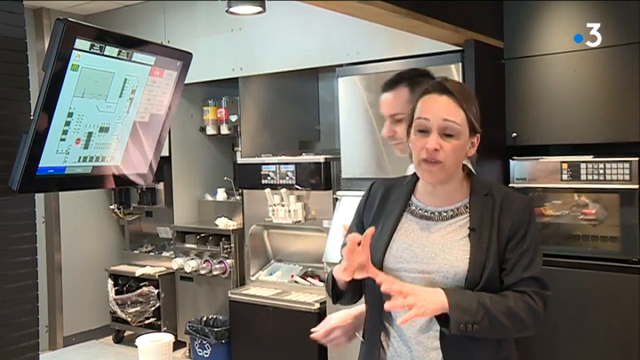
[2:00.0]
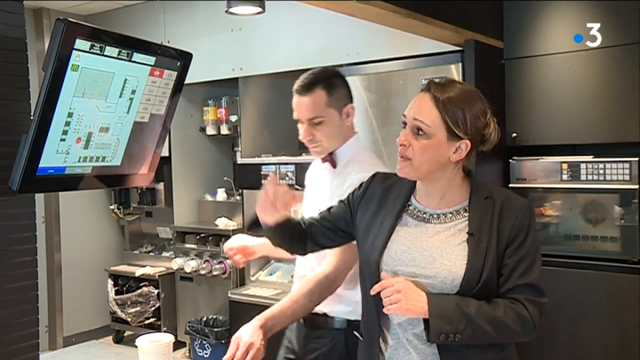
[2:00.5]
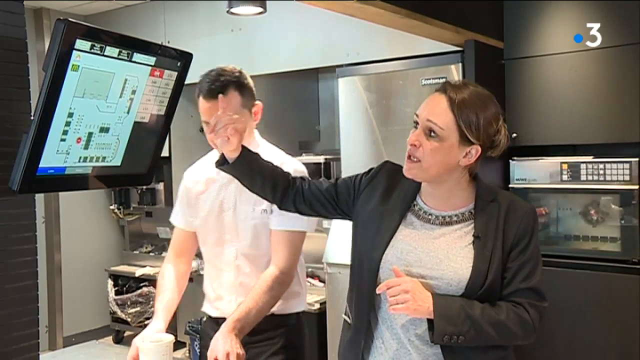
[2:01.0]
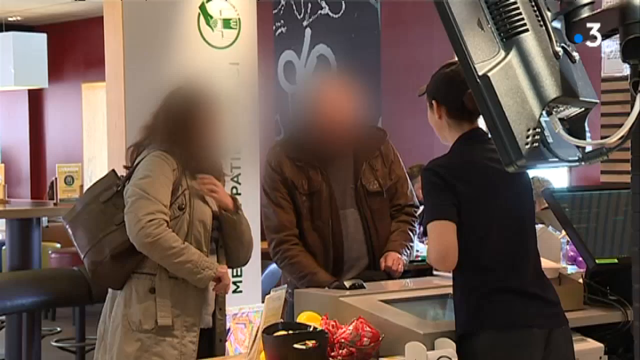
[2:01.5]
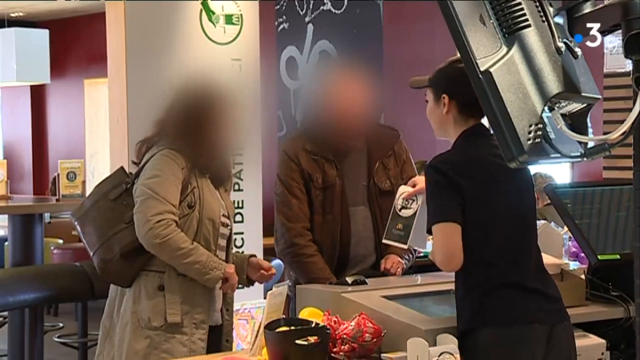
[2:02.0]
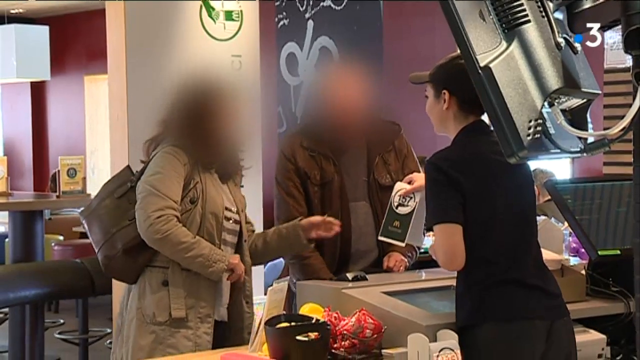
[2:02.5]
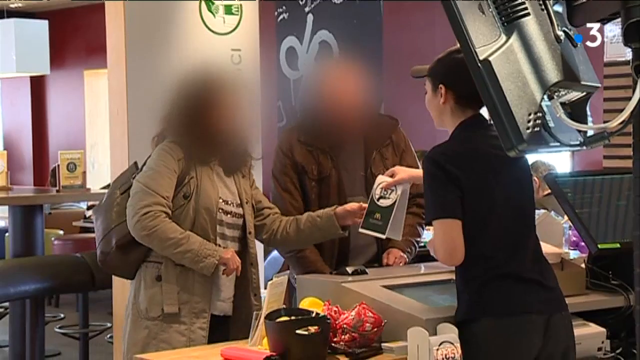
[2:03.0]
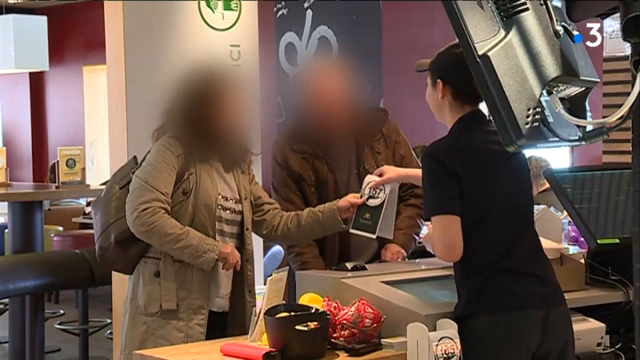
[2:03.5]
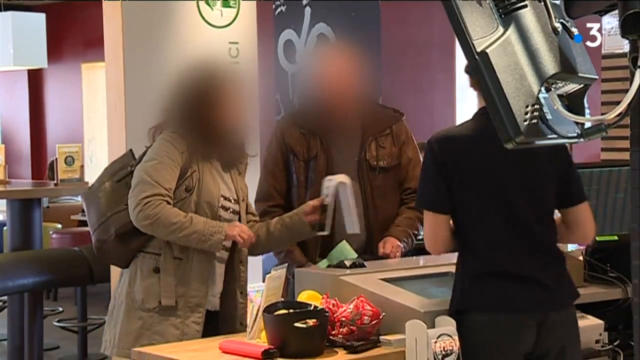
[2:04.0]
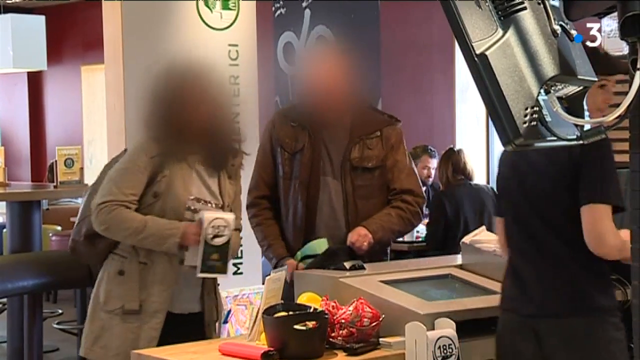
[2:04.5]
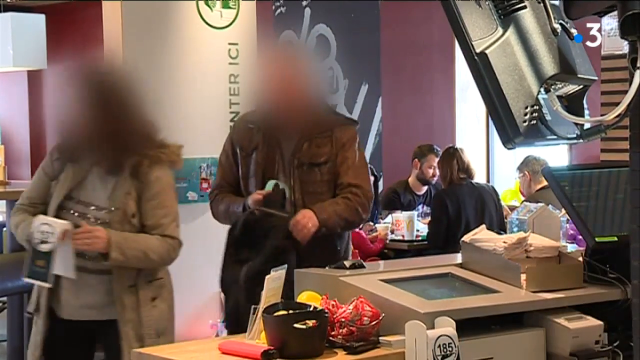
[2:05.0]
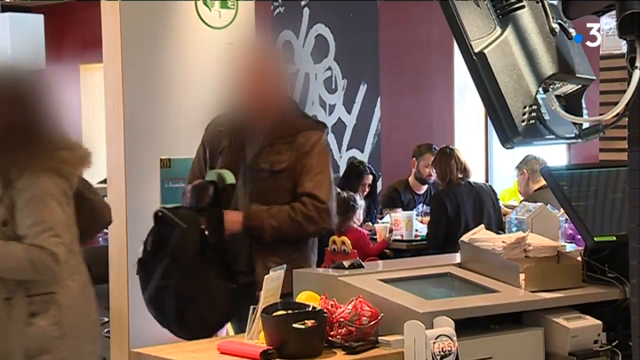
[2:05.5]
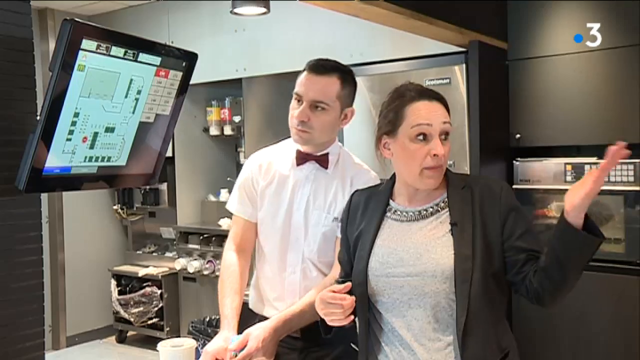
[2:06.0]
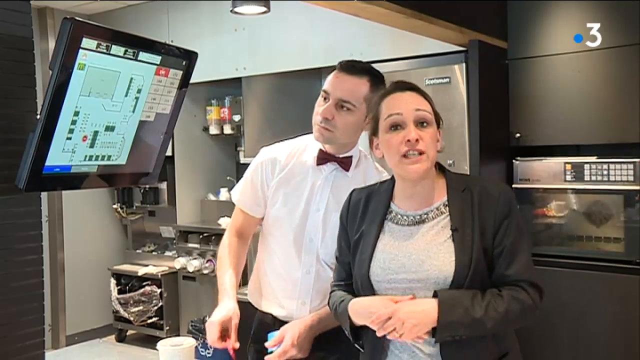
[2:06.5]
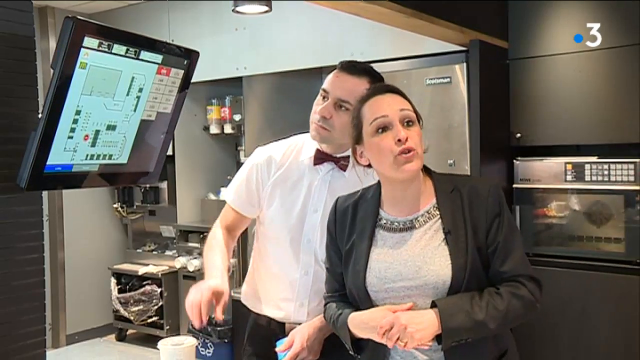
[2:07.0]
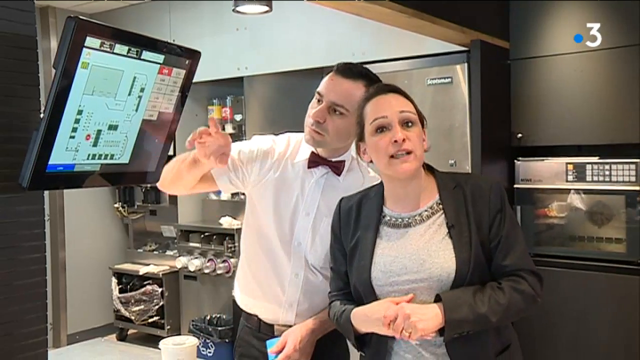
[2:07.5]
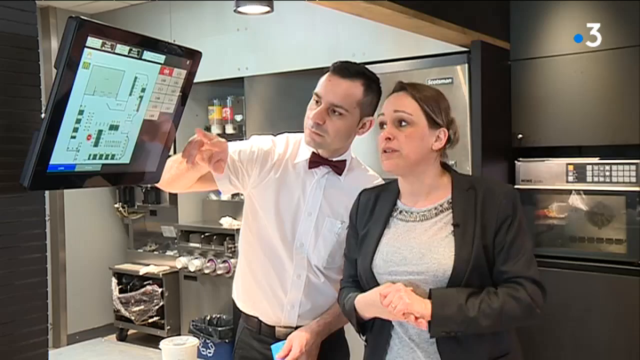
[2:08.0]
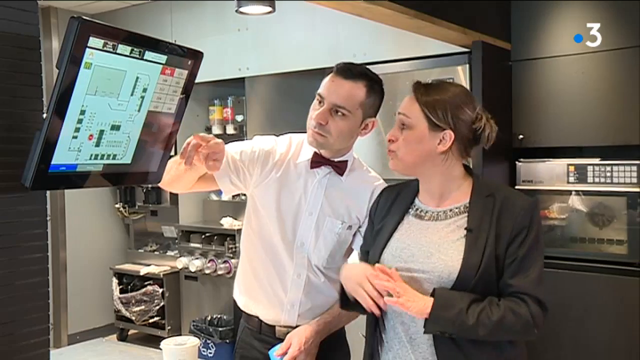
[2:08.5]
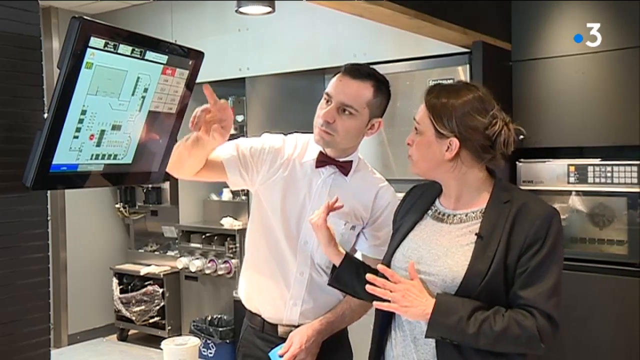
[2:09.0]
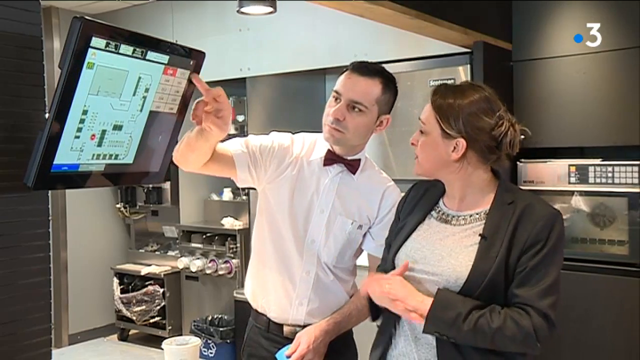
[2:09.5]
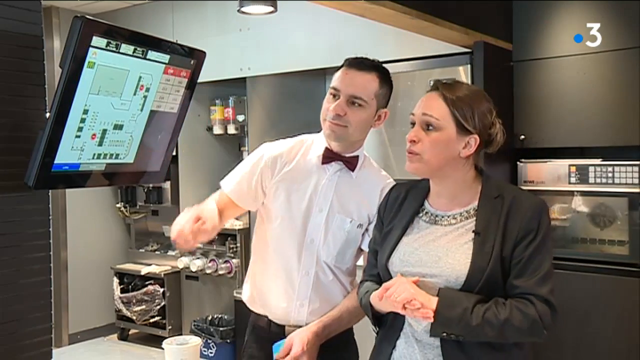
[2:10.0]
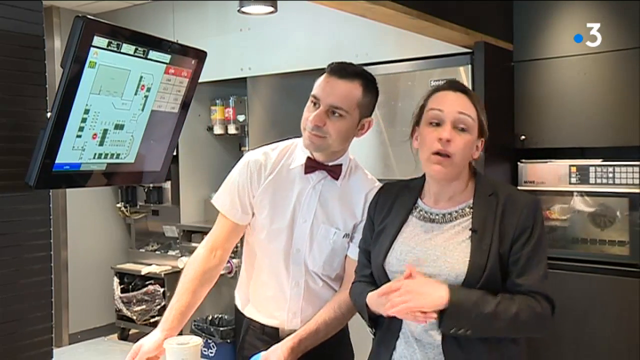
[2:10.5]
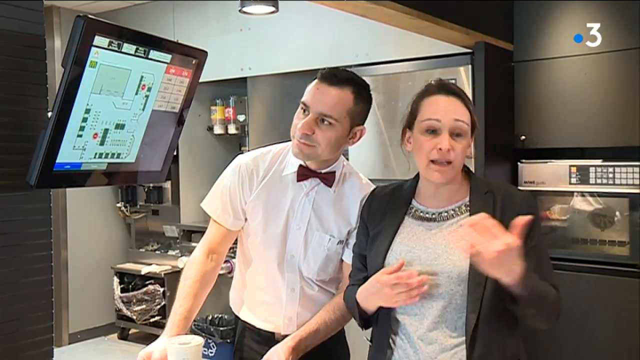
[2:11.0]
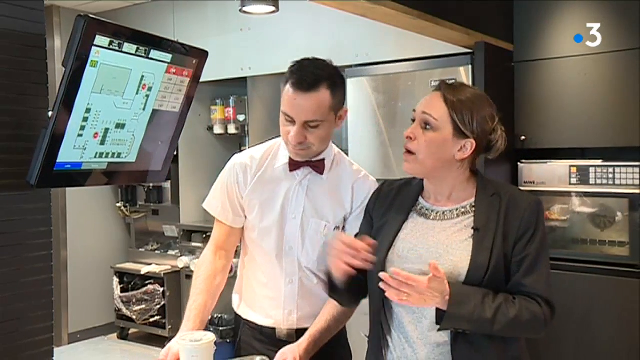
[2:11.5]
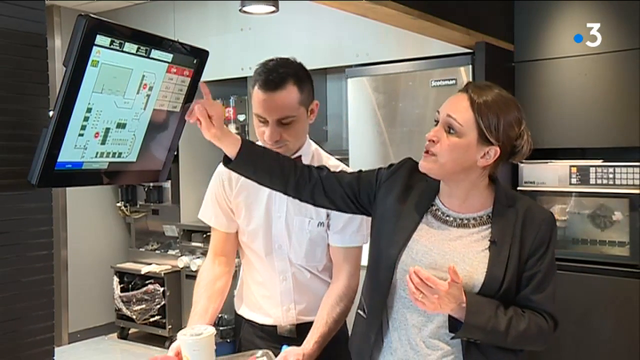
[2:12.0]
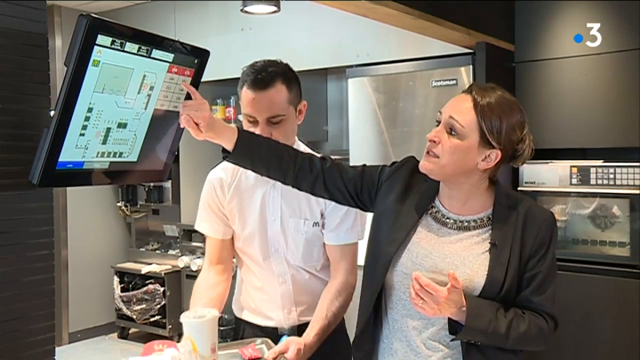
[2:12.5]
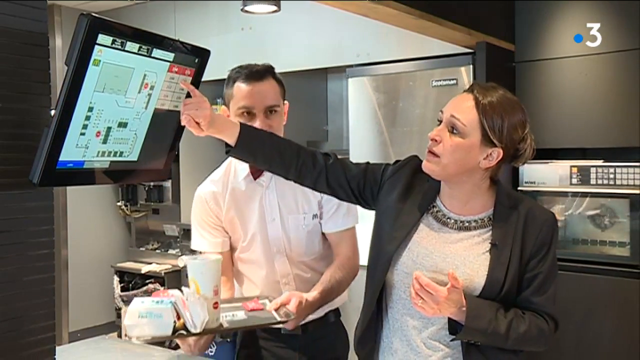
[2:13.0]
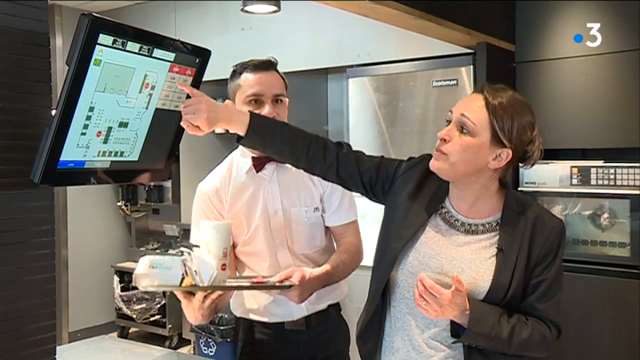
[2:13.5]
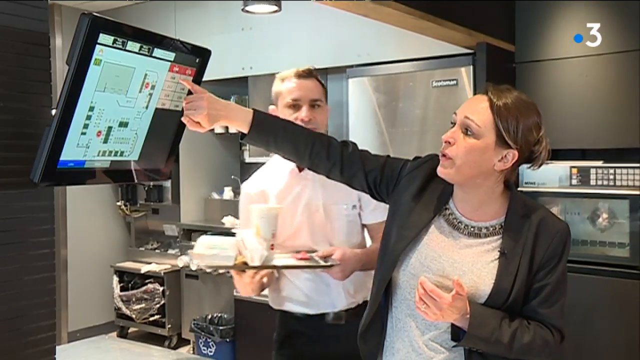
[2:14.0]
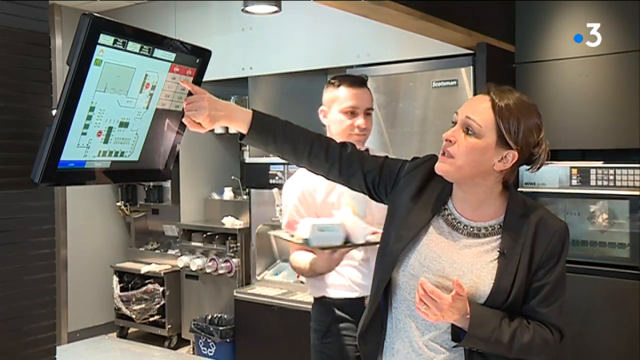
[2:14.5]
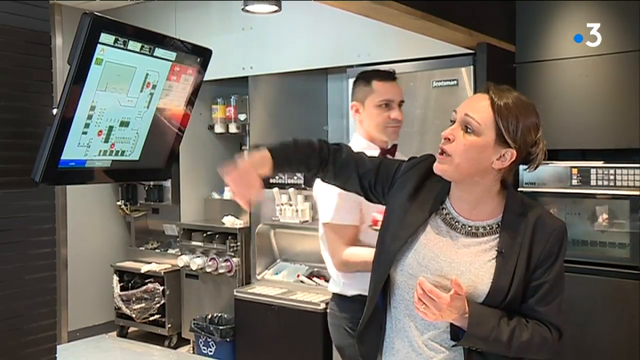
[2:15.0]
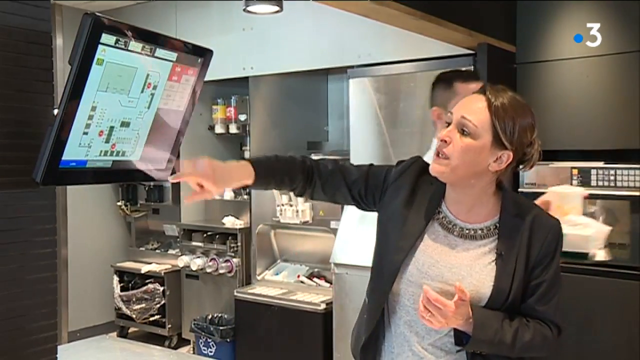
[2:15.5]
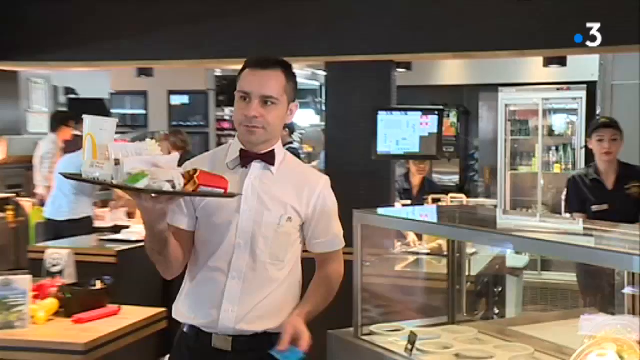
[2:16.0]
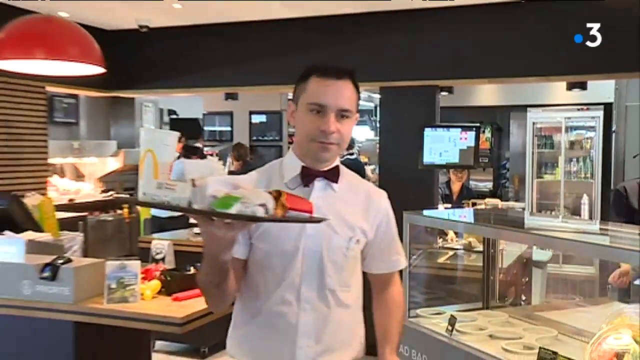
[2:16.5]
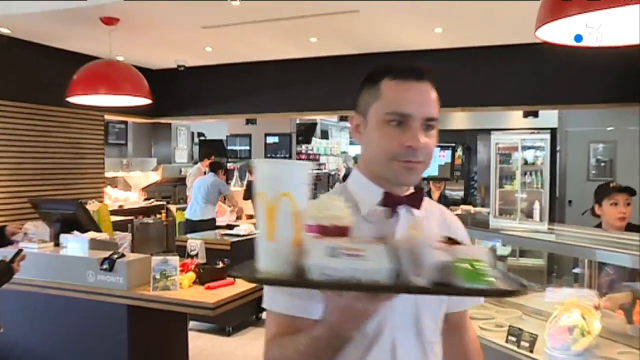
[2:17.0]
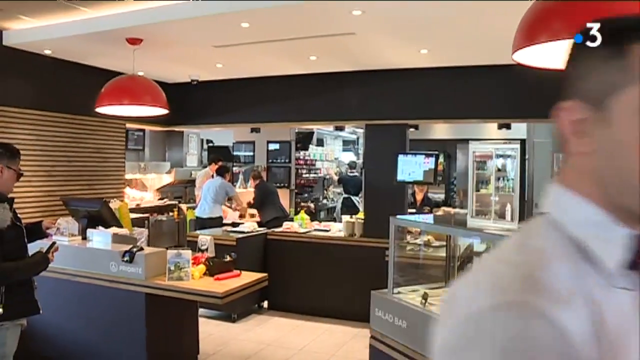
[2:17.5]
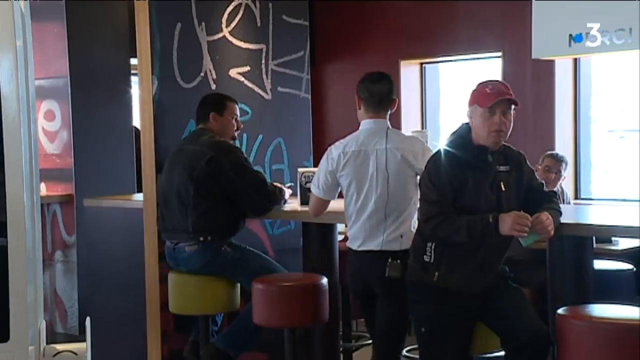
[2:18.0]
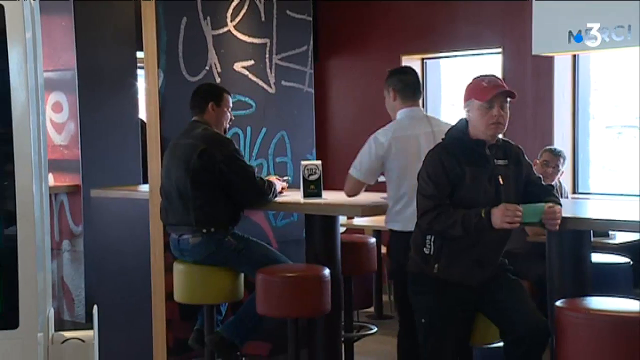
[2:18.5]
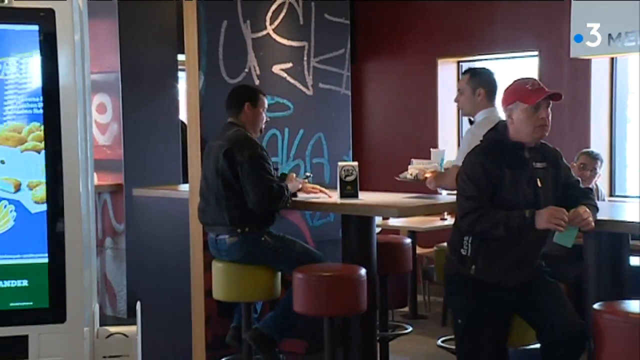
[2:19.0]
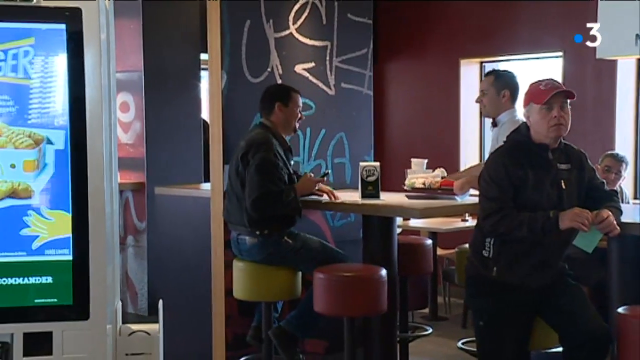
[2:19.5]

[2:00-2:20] Customers in a McDonald's restaurant, apparently a man and a woman with their faces blurred, receive a numbered card from an employee behind the counter, take the card and walk off to the left. The video switches back to a woman in a gray jacket and white shirt who gestures as she speaks. Behind her, a man in a white shirt and a red bow tie points to a screen in the kitchen showing numbers and what looks like a diagram of the restaurant, apparently used to keep track of orders. He gestures to different numbers, and the woman reaches up and points to some of the numbers on the screen as though describing what is displayed. The man also looks down at what looks like a tray of food directly in front of him; as the woman speaks, he grabs the tray and walks away. A close-up shows him carrying the tray out into the restaurant, suggesting the screen showed where the food was to be delivered. He delivers the tray to a customer seated at a table with a numbered sign on it indicating where the order was to be delivered.